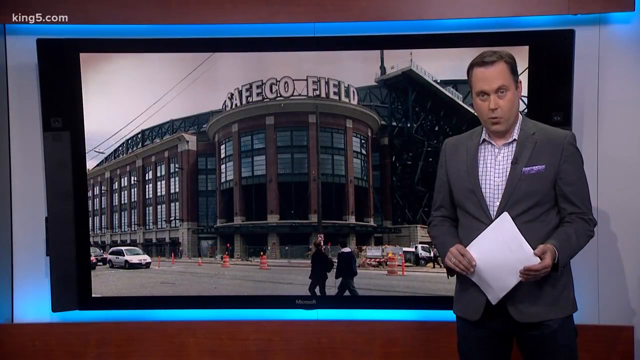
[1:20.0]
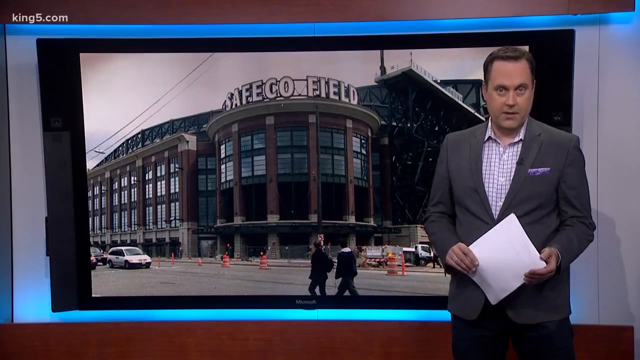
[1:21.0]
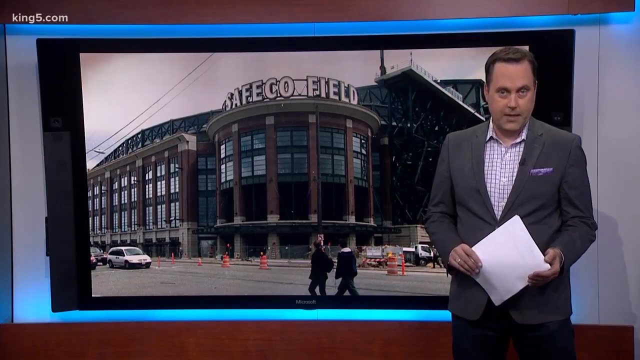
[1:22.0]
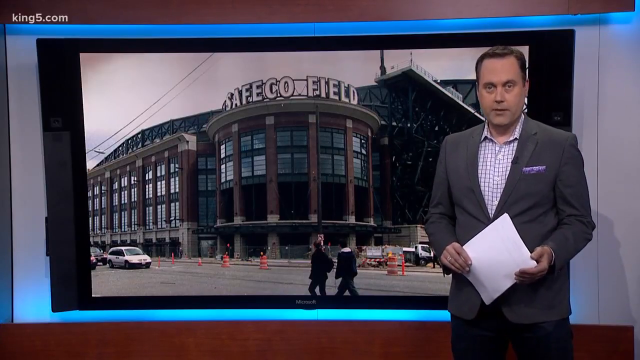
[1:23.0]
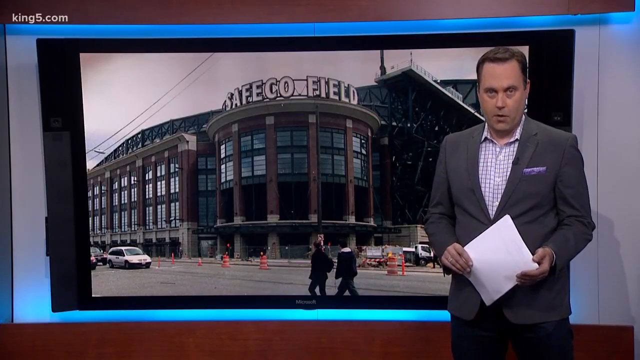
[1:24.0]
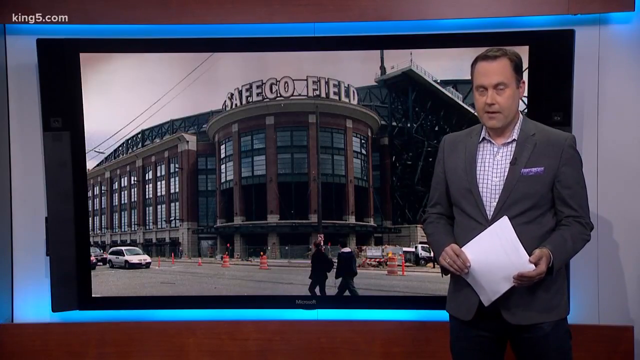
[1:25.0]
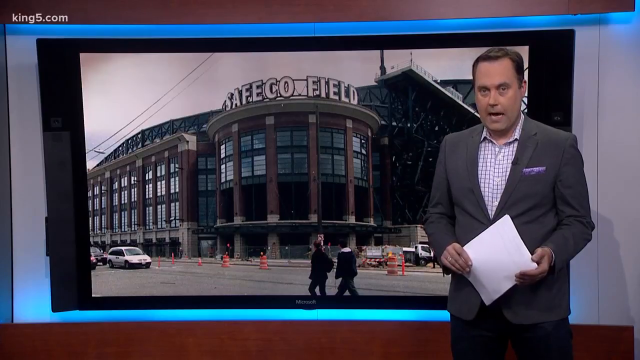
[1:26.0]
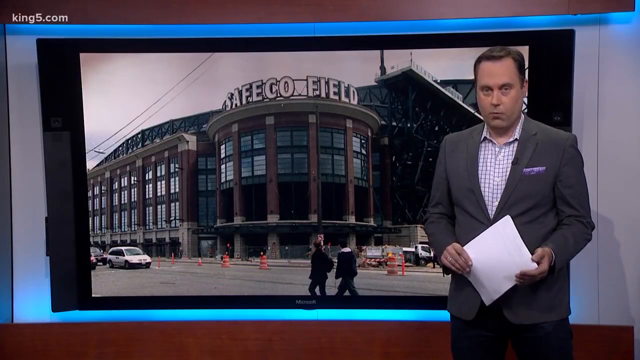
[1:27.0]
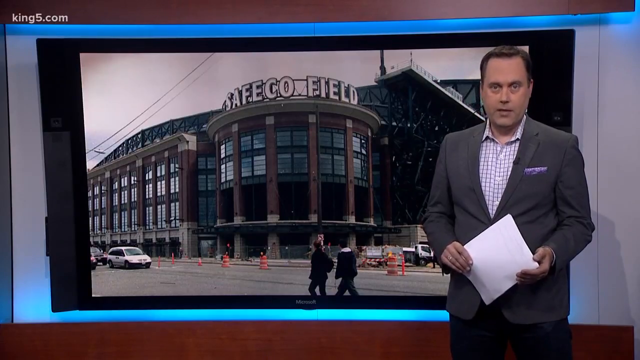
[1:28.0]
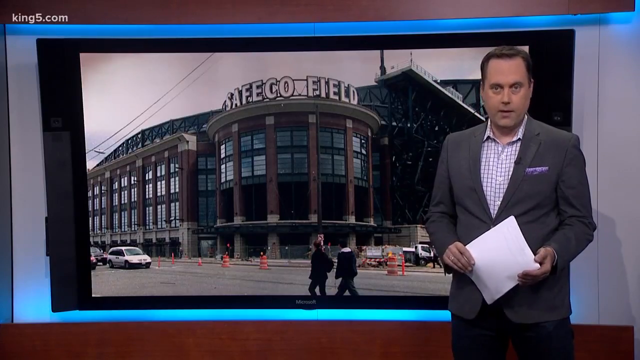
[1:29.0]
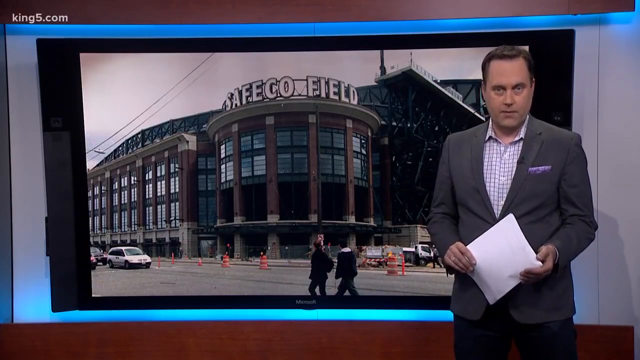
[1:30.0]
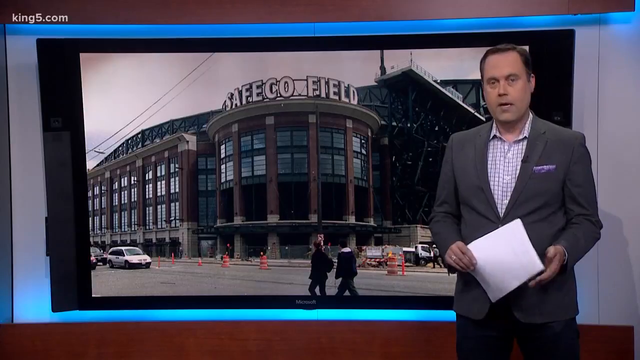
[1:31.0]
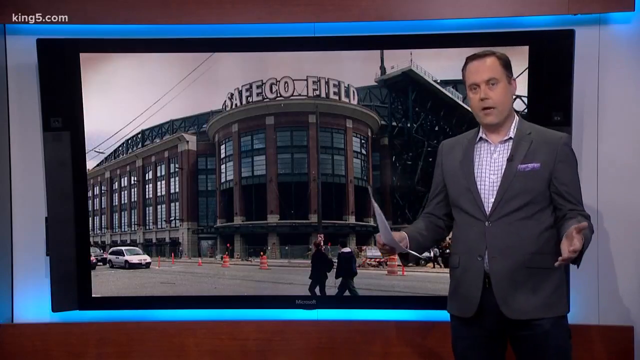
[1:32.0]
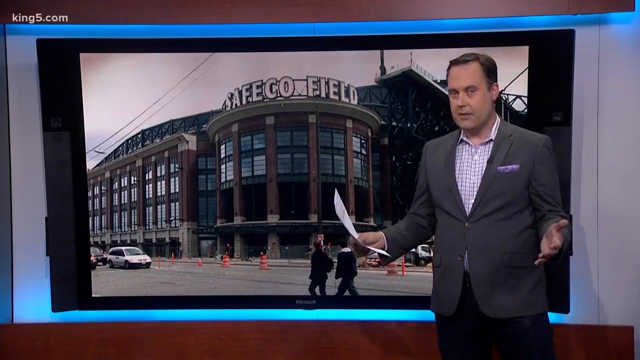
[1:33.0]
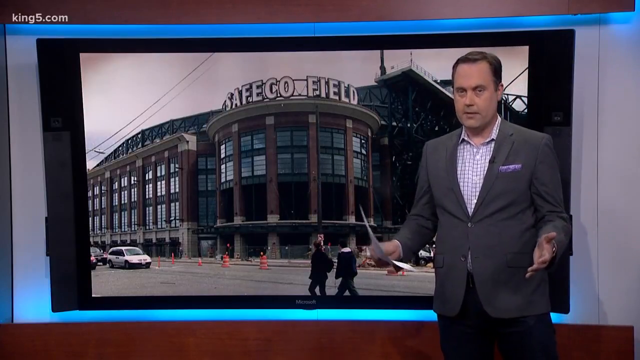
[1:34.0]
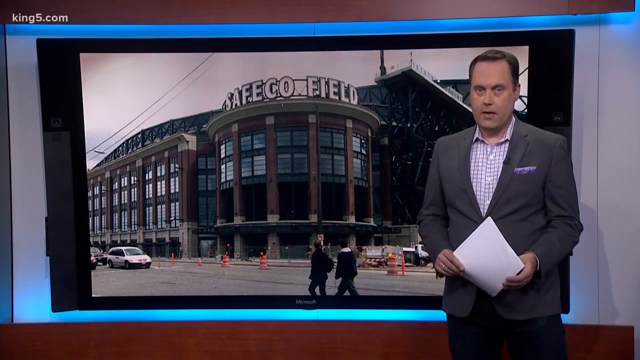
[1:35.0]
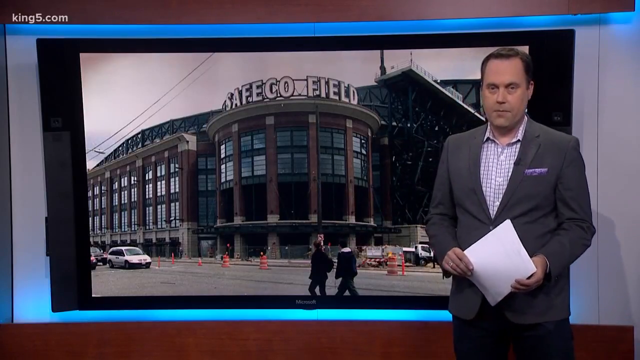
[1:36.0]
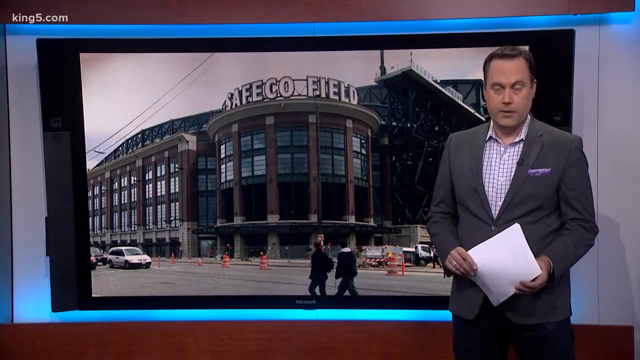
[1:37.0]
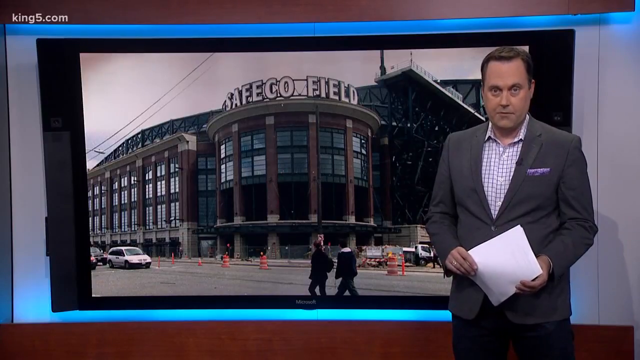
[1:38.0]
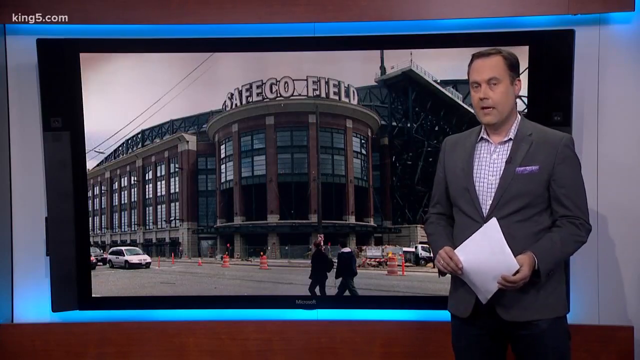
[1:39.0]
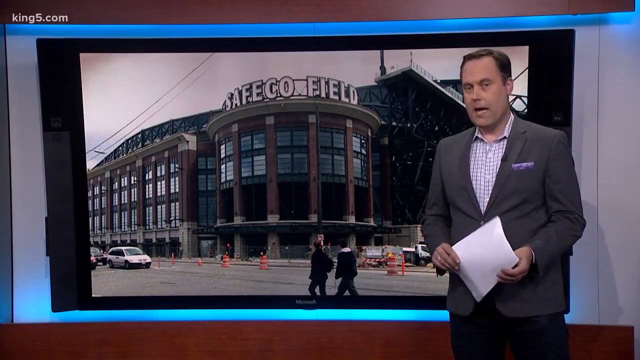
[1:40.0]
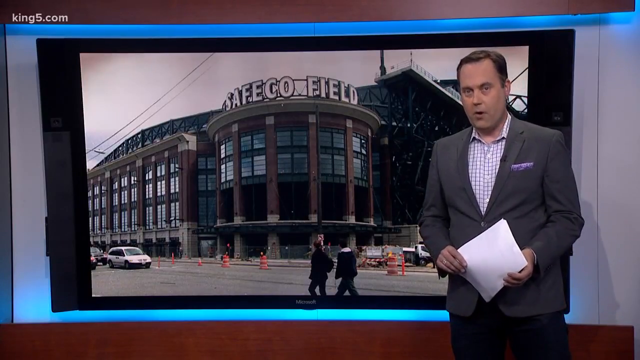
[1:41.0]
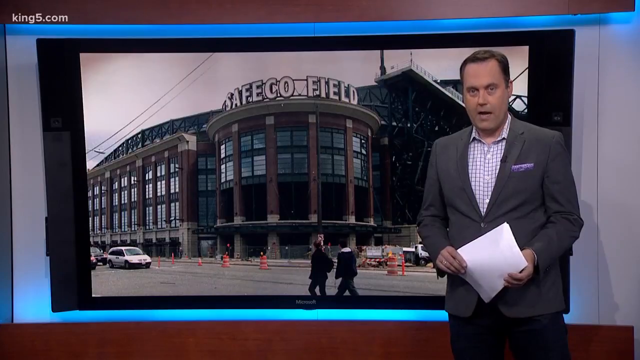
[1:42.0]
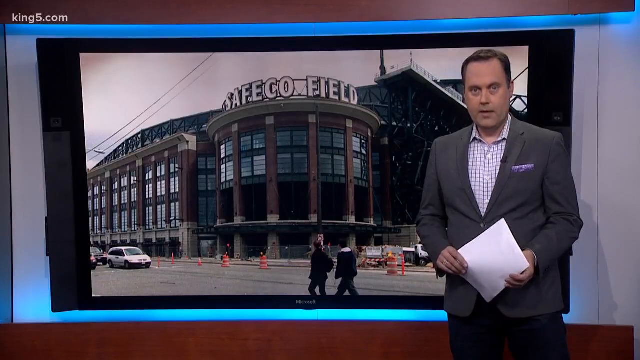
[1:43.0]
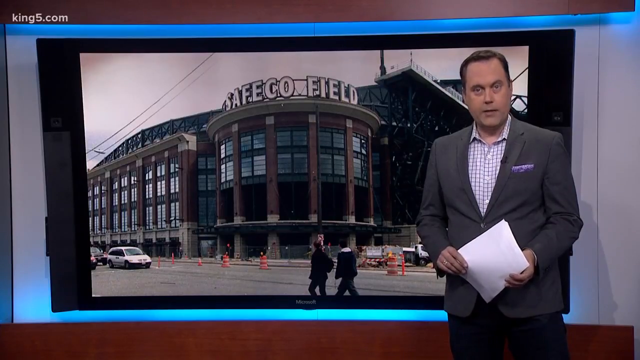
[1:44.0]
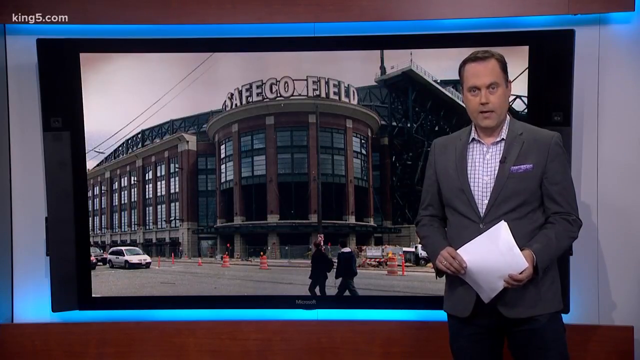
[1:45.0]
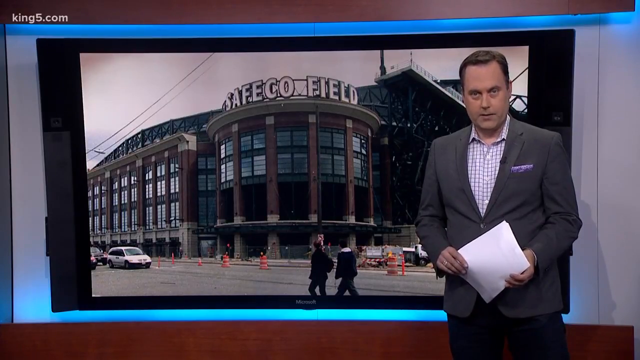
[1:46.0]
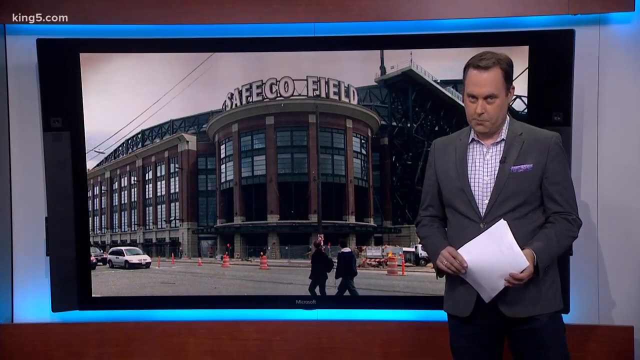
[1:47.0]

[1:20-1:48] The newscaster holds papers, with an image of the Safeco building behind him and orange cones all around its front. He looks directly at the camera and talks. He does not move, staying off to the right, but his hands move: he spreads them apart, holds the paper again, spreads them apart again, and holds the paper again. In front of the building there appears to be a small work truck, with parking off to the side. Caution signs are on top of the orange cones. Apart from two people walking on the street on the other side, no one is visible. There seem to be gates under the entrance of the Safeco building, as if it is blocked off.